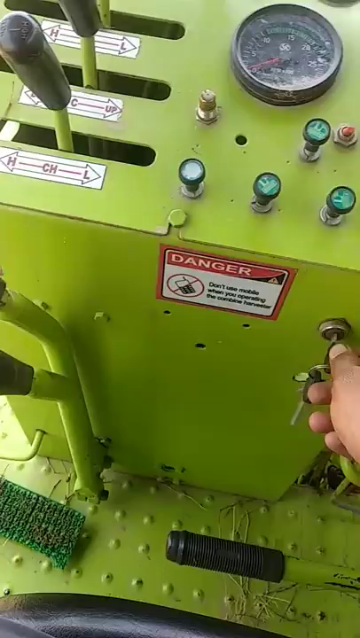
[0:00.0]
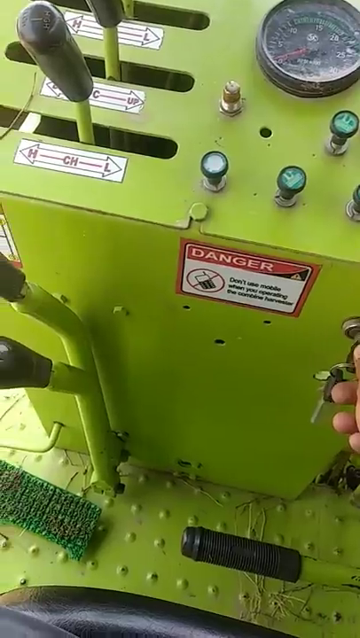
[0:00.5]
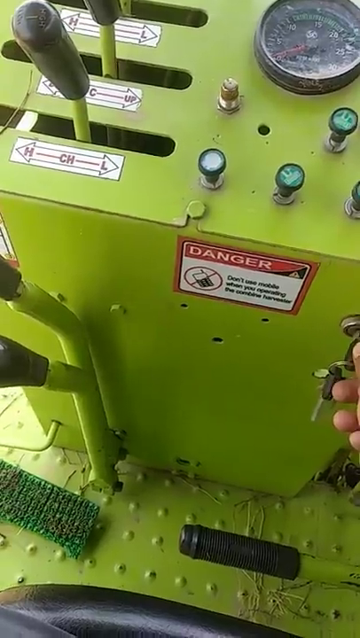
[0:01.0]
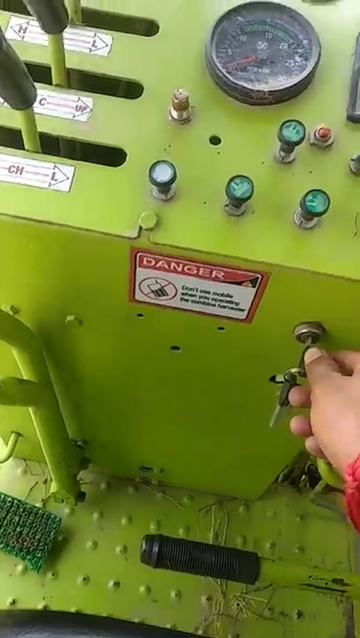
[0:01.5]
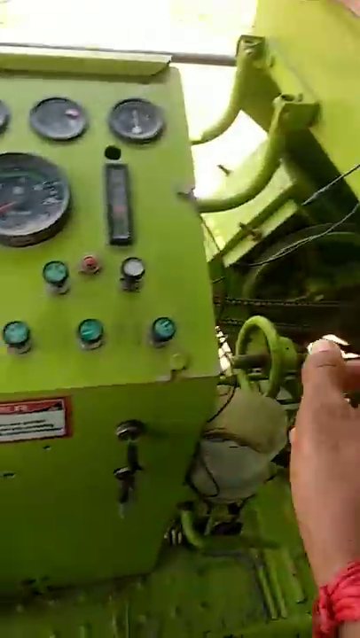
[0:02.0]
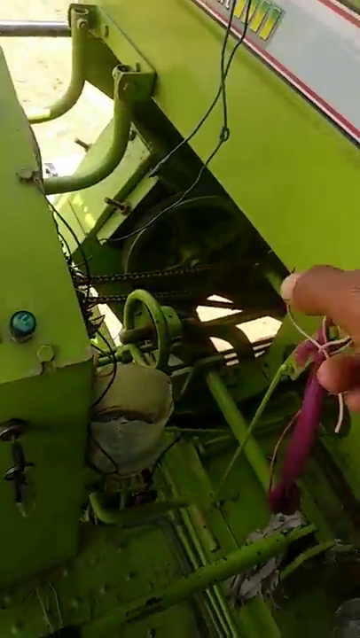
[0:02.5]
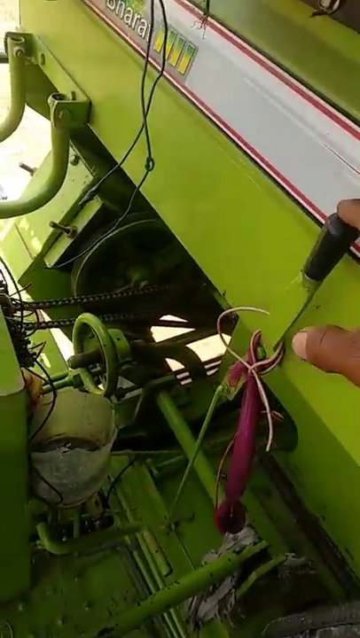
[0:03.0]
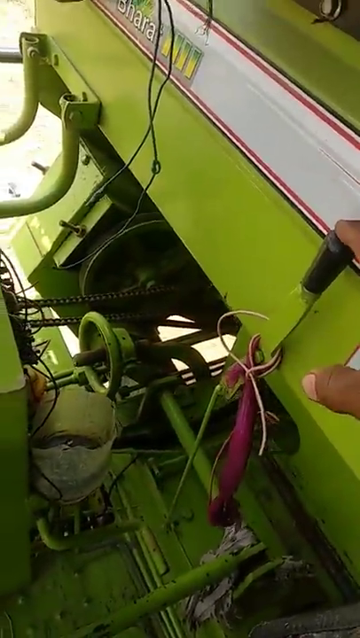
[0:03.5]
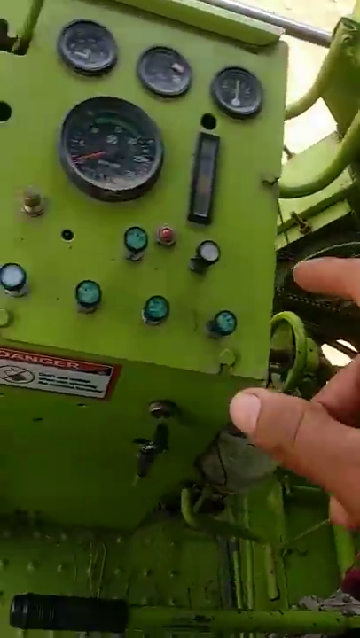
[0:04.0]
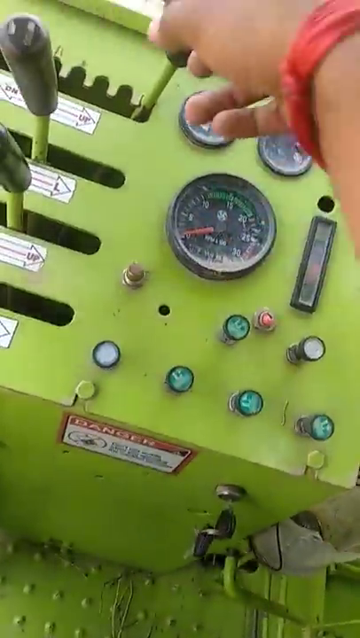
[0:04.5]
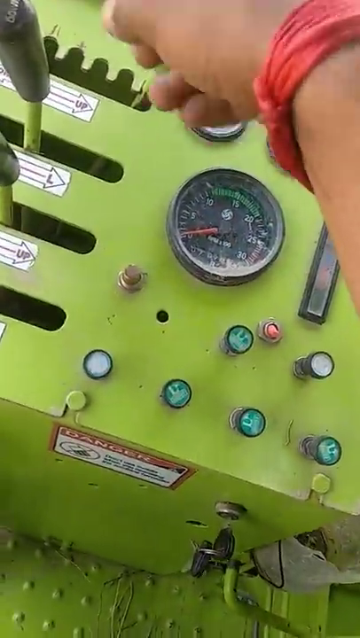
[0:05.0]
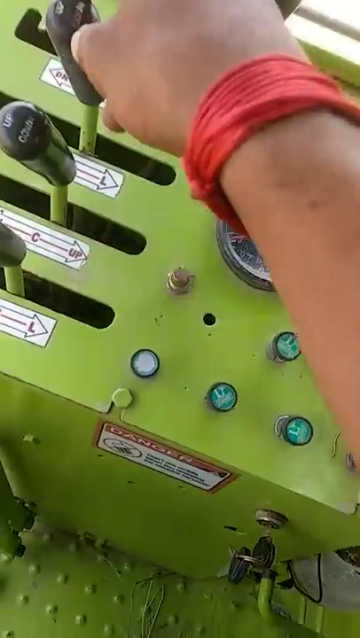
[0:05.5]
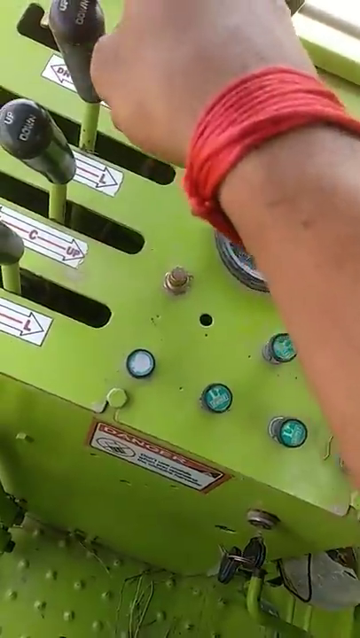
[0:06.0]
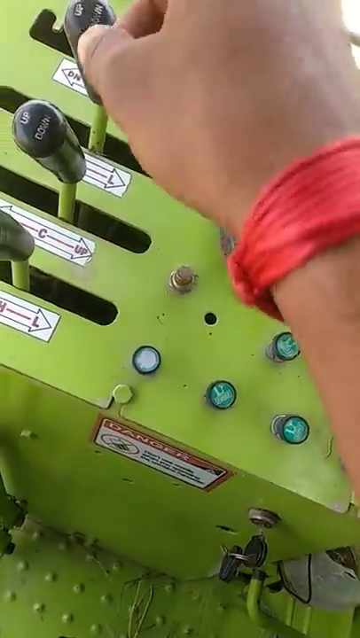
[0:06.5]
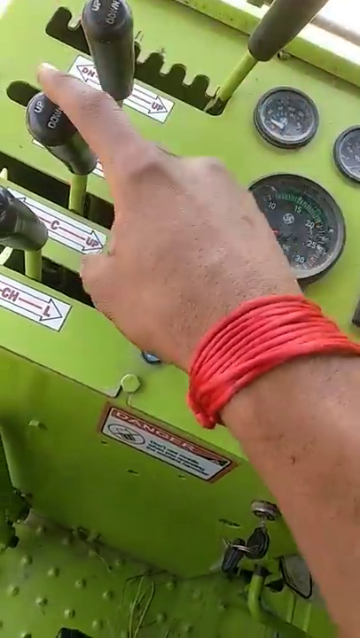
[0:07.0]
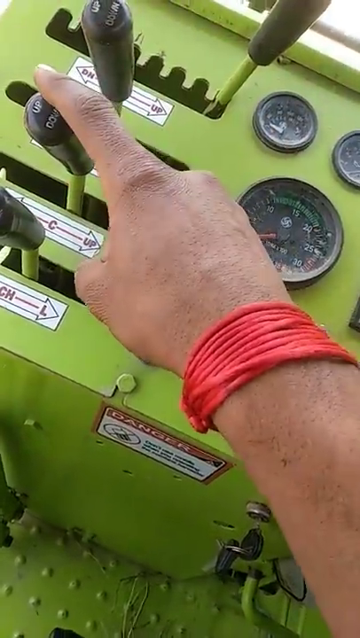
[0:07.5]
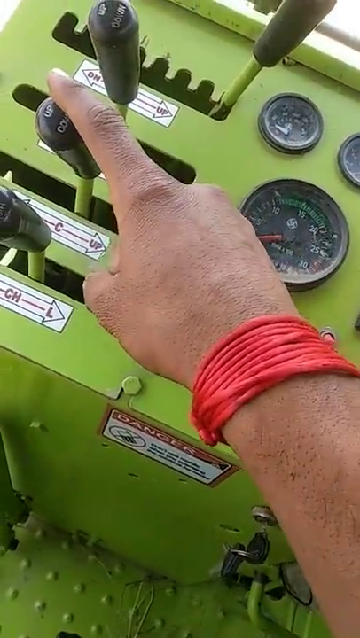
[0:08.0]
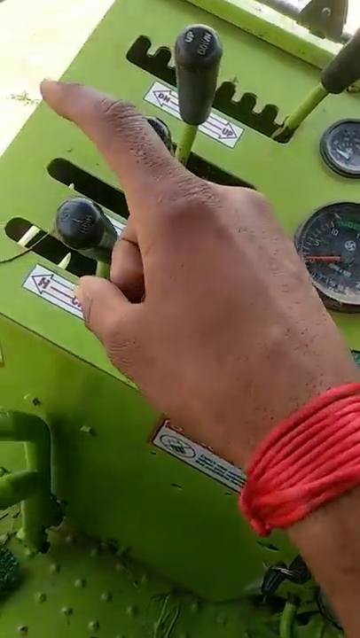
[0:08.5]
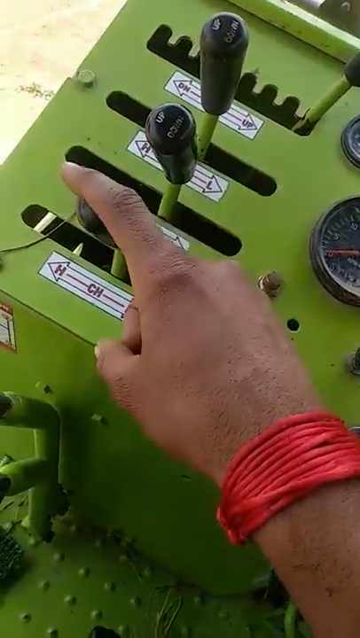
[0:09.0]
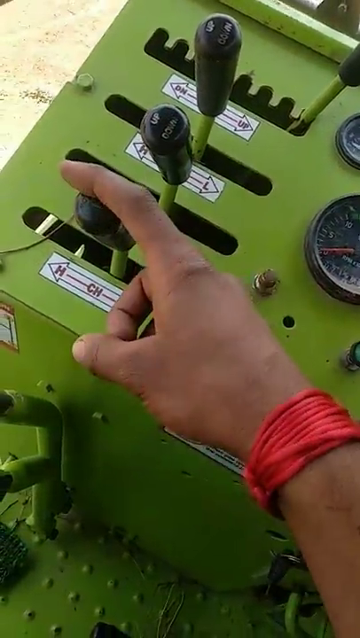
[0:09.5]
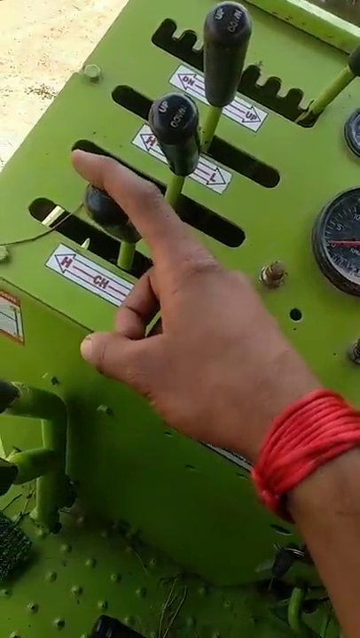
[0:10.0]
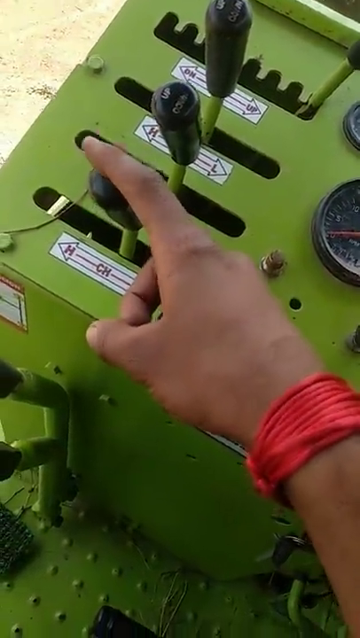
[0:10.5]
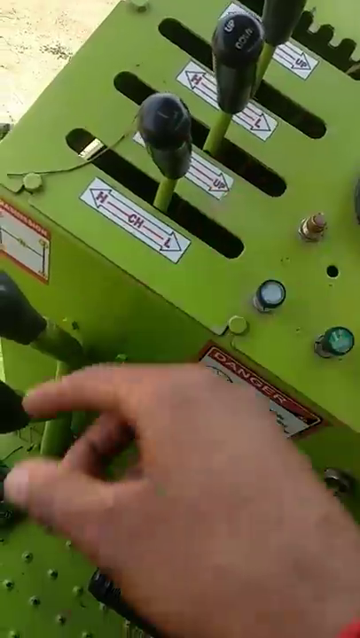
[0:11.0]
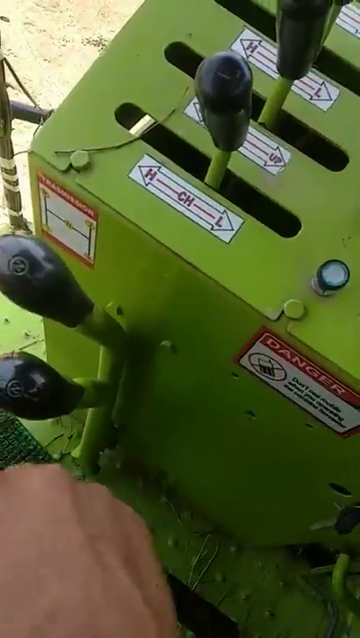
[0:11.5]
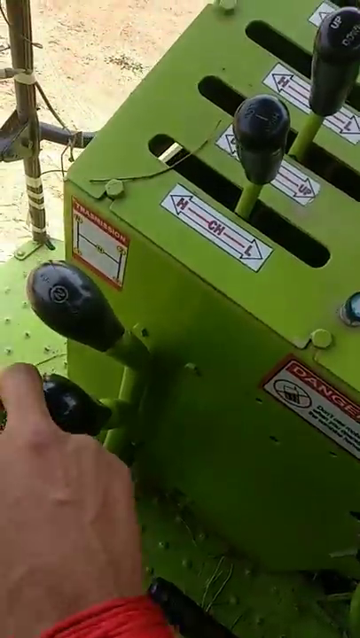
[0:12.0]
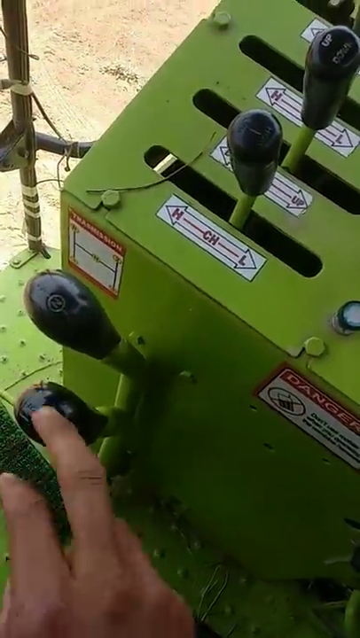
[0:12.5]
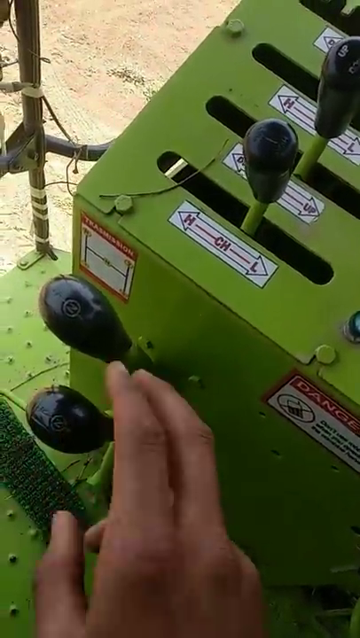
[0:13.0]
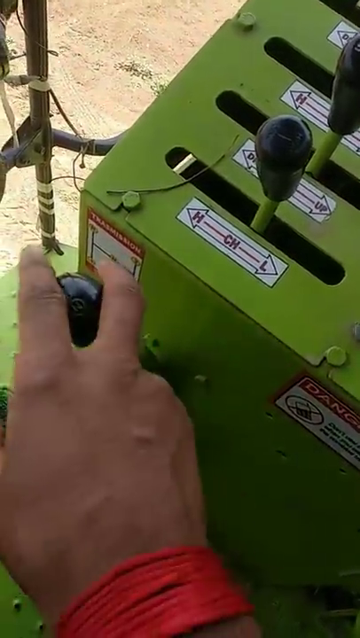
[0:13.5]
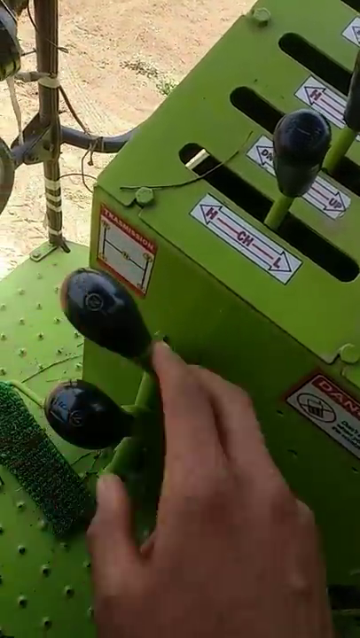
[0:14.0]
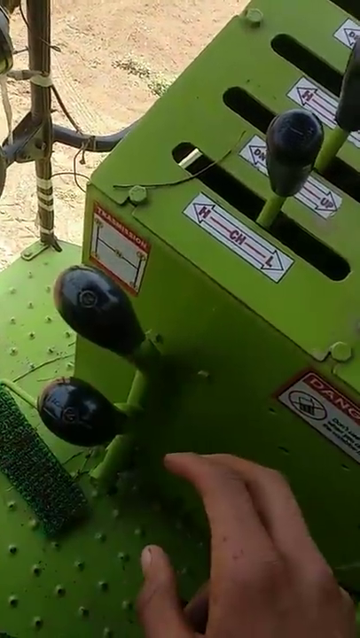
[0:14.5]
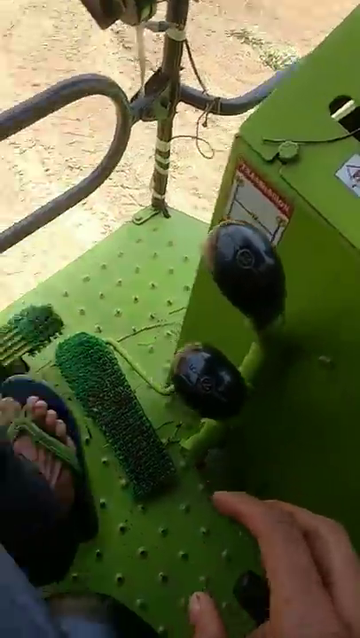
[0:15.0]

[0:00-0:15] What appears to be an instructional or how-to video on operating a piece of machinery carries the title "Combine Harvester Operating System." The main focus is a very large lime green control panel, almost like a very tall, platform-shaped device. Several large black handles that move horizontally are on the left, along with a multitude of buttons and gauges. A person's hand is shown. At first, the person points with a finger to a smaller lever near a larger portion of the machine, which looks like it may be the harvester itself; only a partial view is visible, showing some wheels, wires and cabling. The camera then pans back toward the control panel. The person begins pointing at the various black handles on the left-hand side of the device, as well as a couple of handles on the side base of the control module. A couple of danger stickers are on the front and bottom side portion of the control panel. The person has tan skin and is wearing what looks like something red.